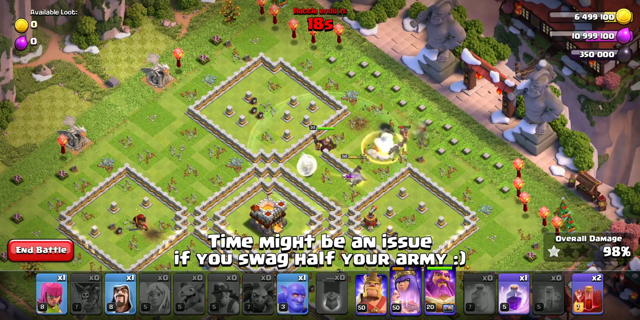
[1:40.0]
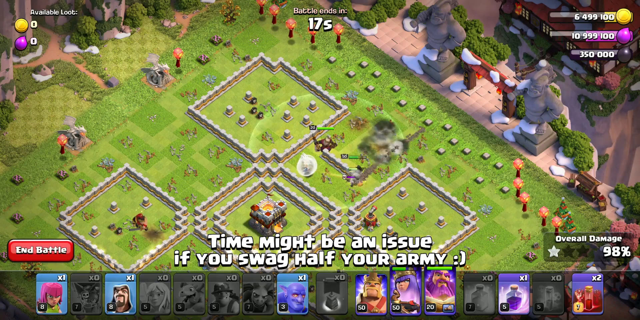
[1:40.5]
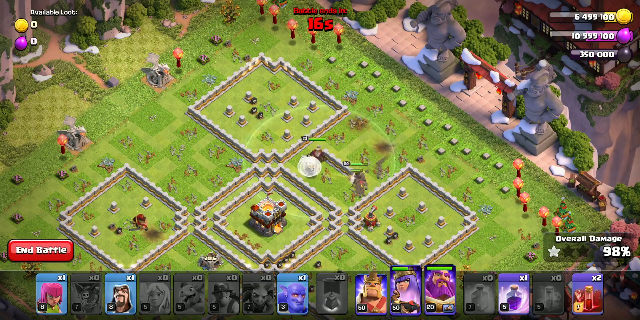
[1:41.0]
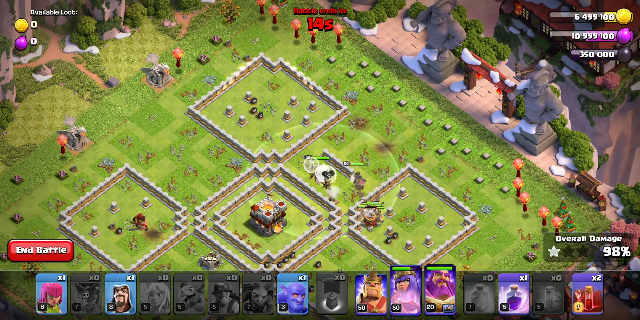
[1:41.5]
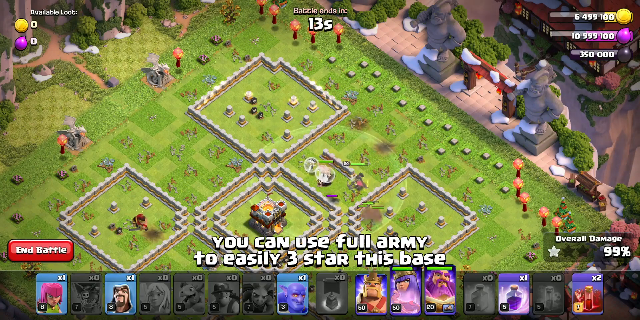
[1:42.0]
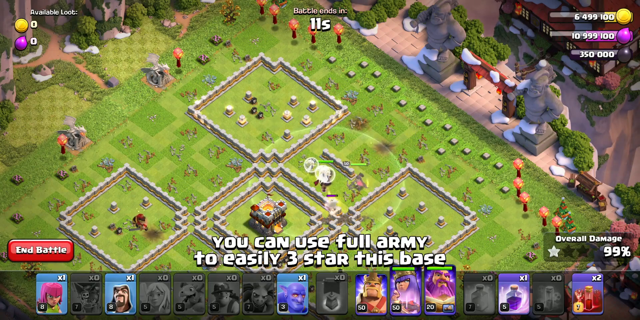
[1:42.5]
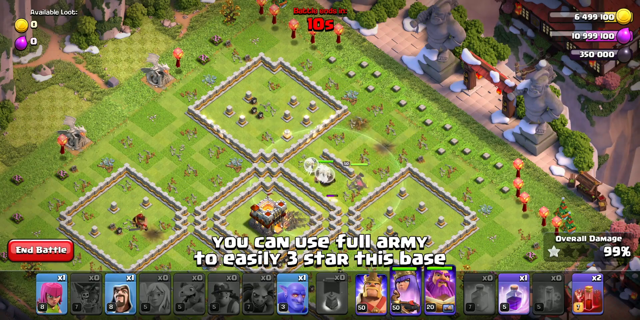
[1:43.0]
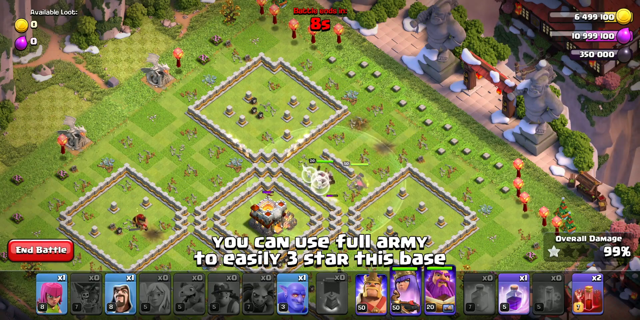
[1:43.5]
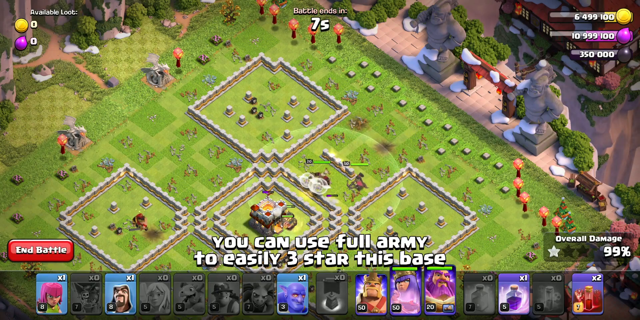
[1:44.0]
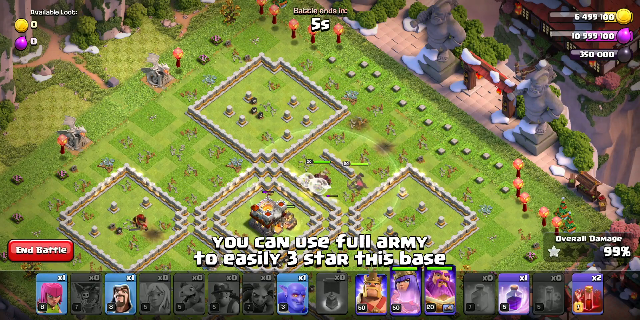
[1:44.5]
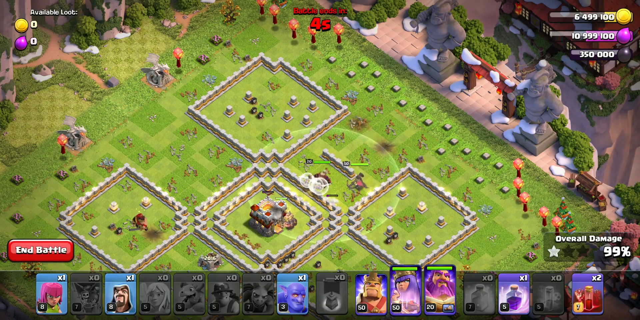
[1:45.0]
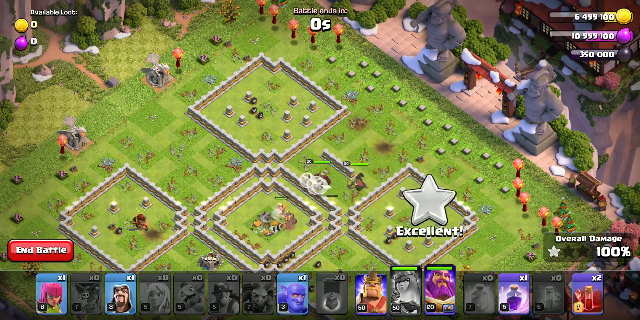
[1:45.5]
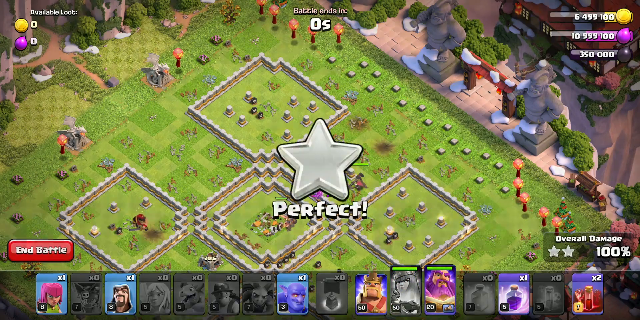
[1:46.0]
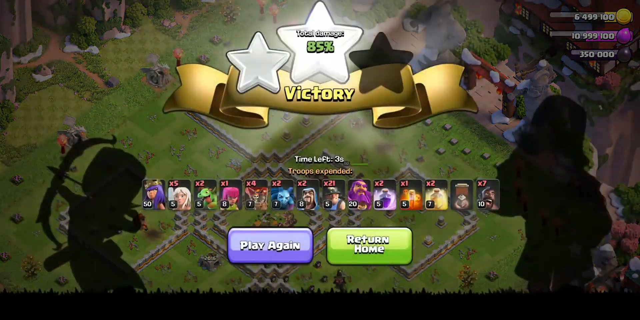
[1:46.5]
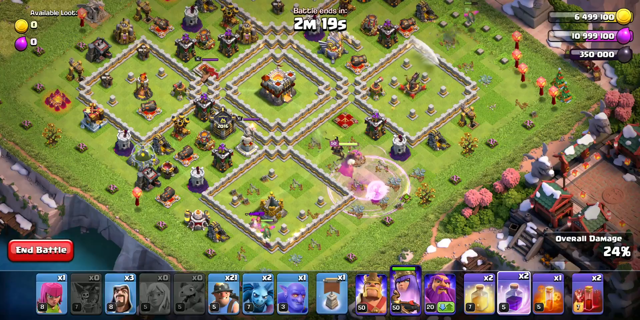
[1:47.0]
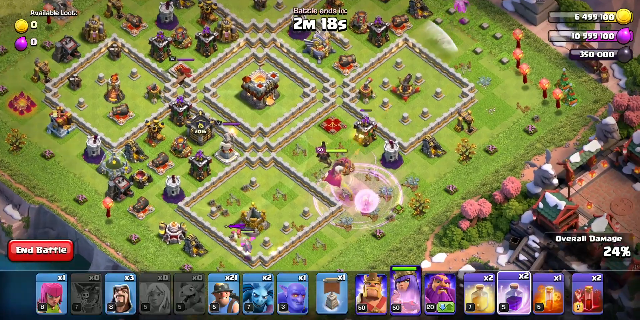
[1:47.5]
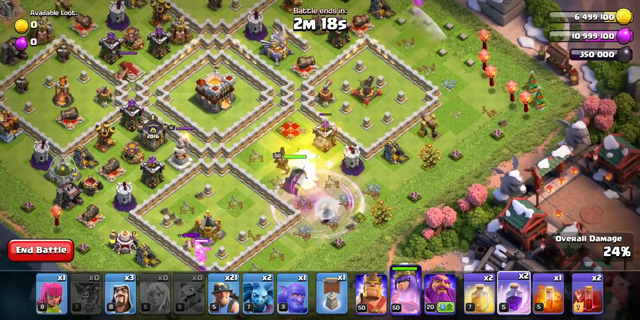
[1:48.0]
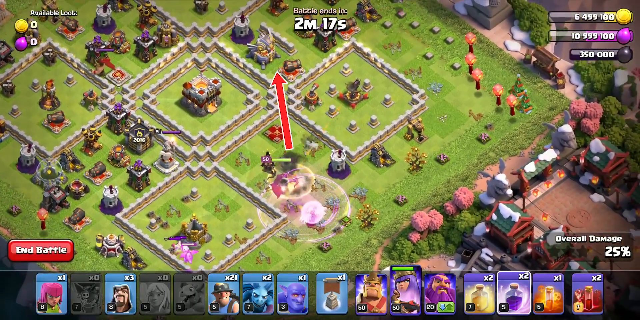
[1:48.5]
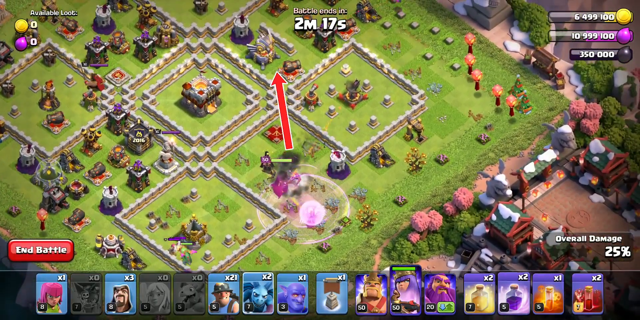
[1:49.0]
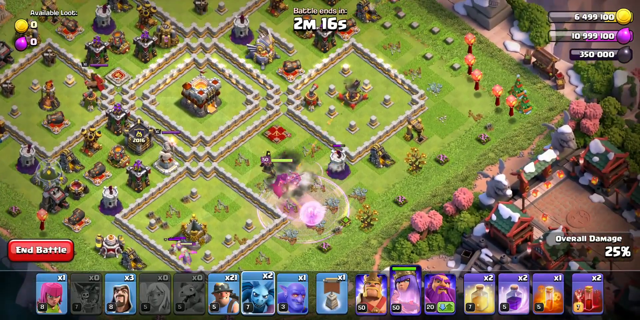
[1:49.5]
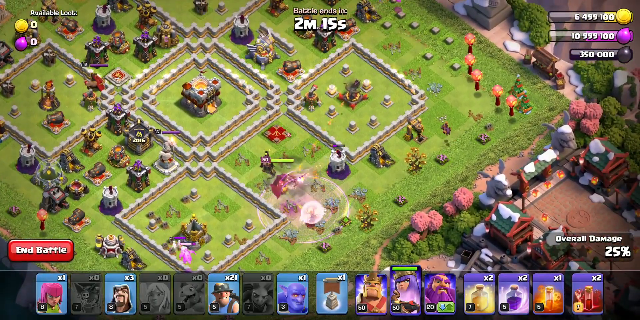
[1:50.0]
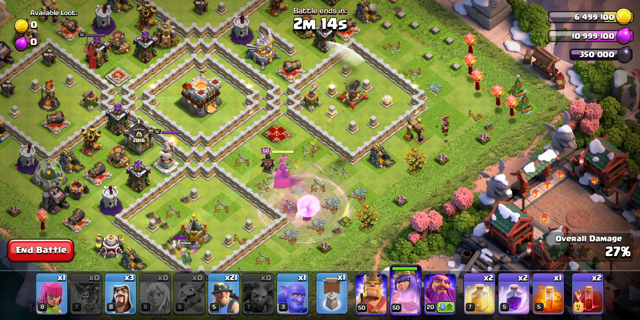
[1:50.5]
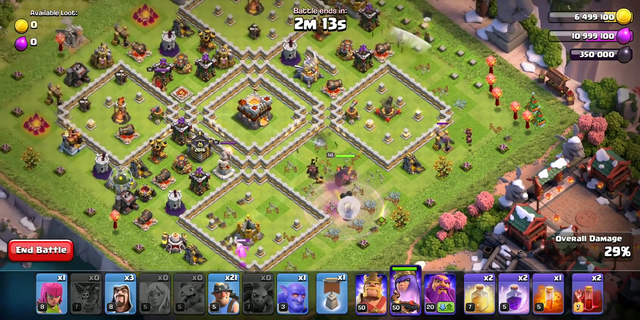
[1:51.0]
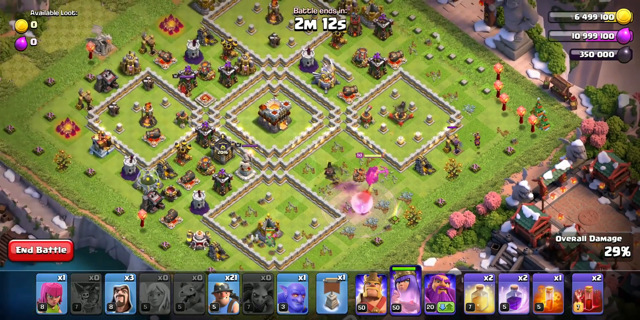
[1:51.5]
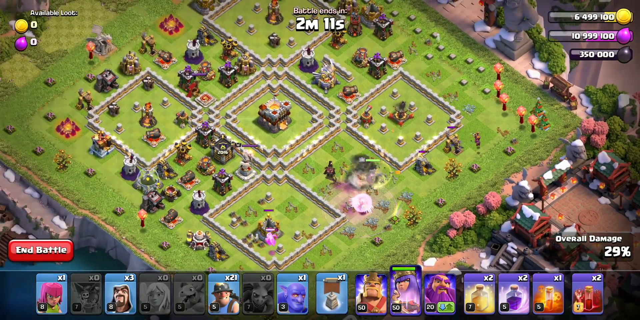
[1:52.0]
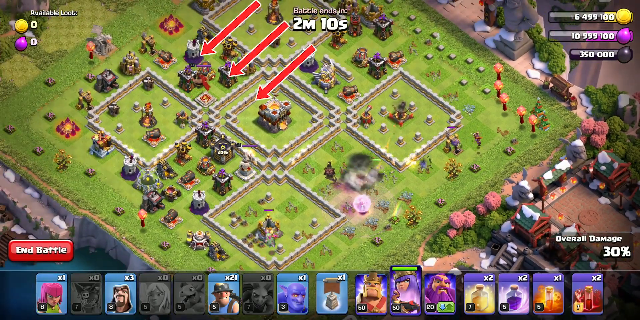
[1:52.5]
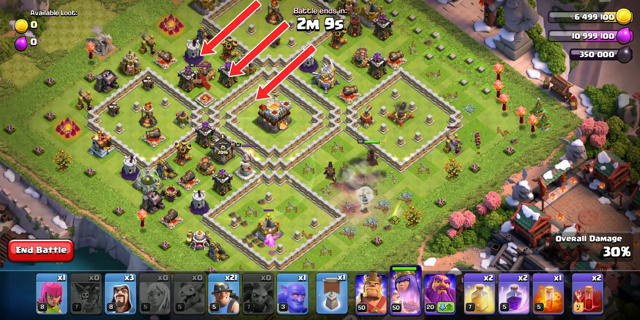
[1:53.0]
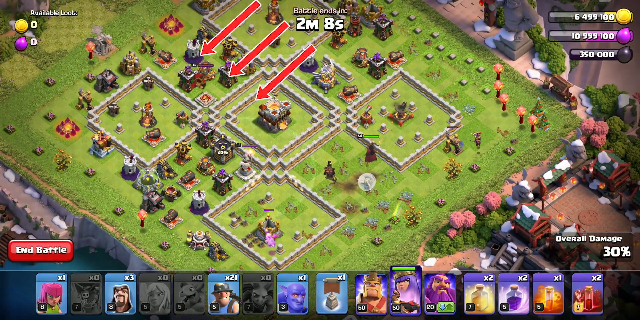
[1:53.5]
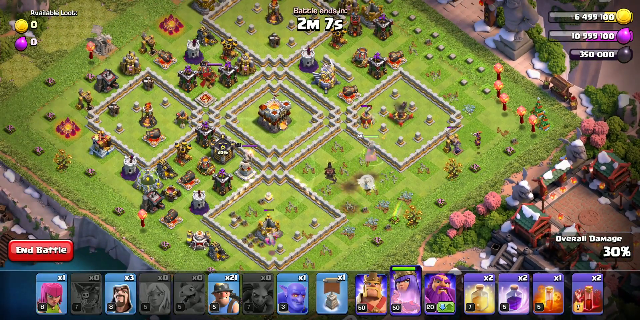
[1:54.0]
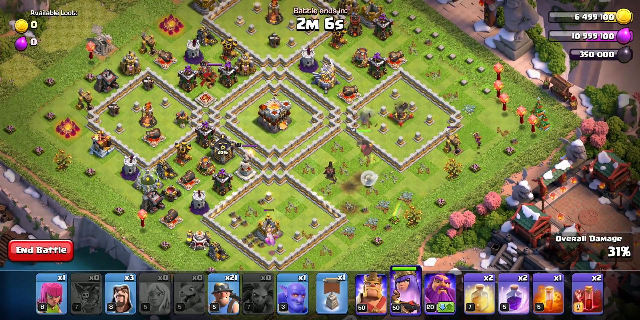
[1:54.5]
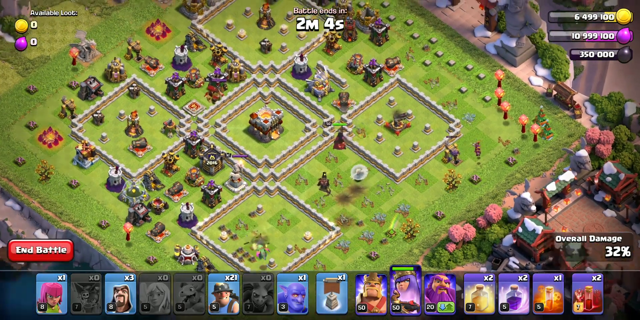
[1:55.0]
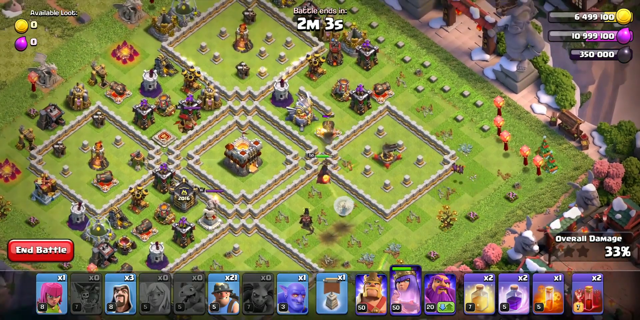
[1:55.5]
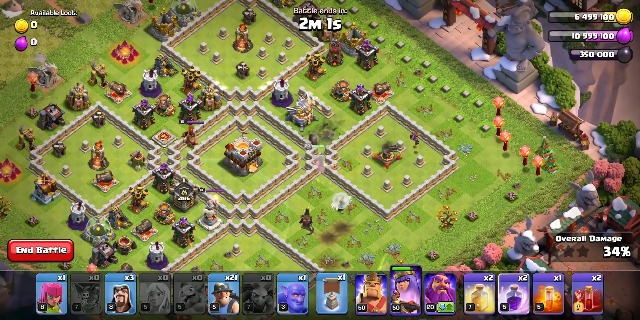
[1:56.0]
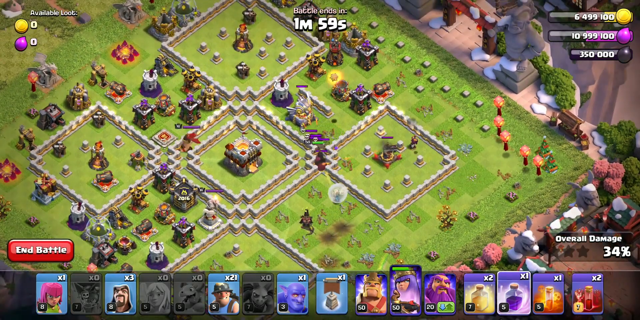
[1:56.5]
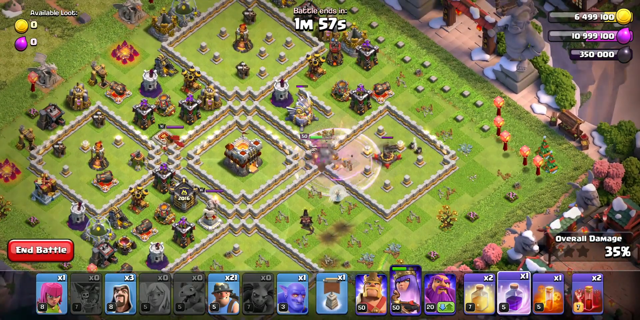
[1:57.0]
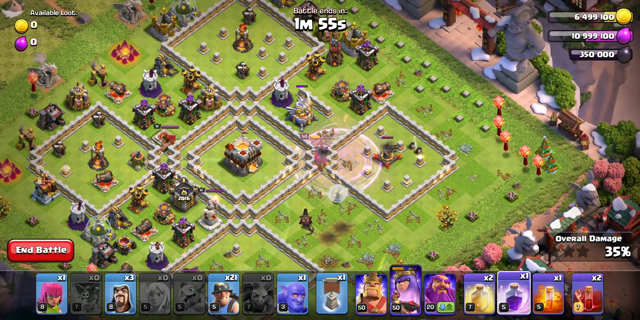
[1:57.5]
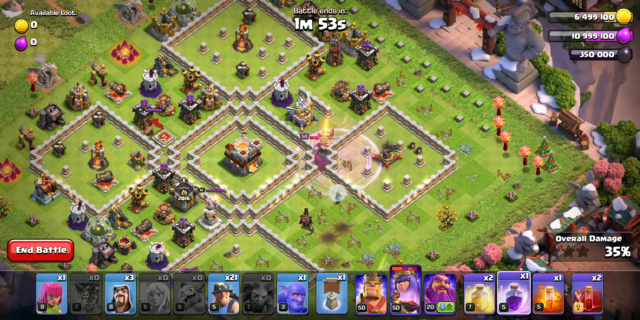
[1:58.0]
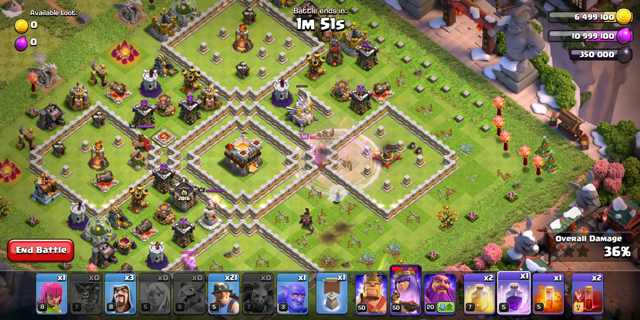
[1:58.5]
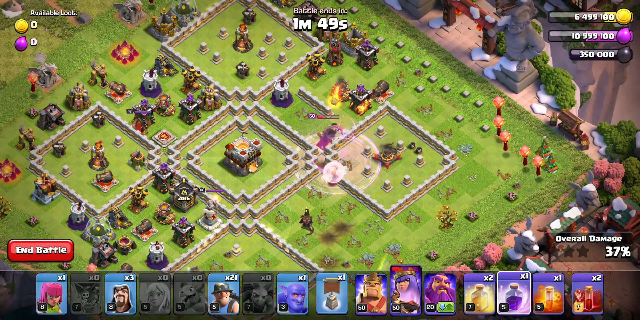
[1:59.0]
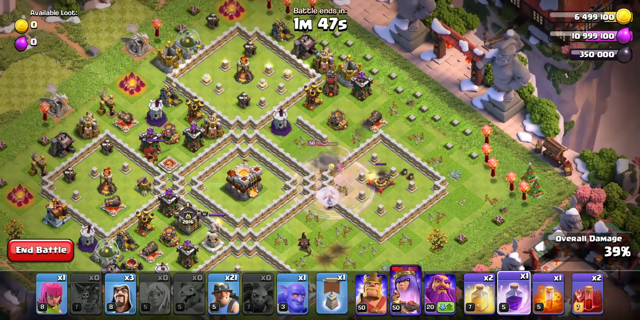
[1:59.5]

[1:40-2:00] White text reads "you can use your full army to easily 3 star battles." The player is rewarded a second star and reaches 100% damage by destroying the middle tower, the home base, which ends the game. The timer turns red as it ticks down from 14 seconds. A silver star reading "excellent" appears for the second star, and the third star reads "perfect," giving three silver stars at the bottom right with 100% damage. The game then pauses and shows the options "play again" and "return home"; the play again button is a purple rectangle and the return home button is green. A silhouette of an archer is on the far left, and what appears to be a barbarian is on the right.